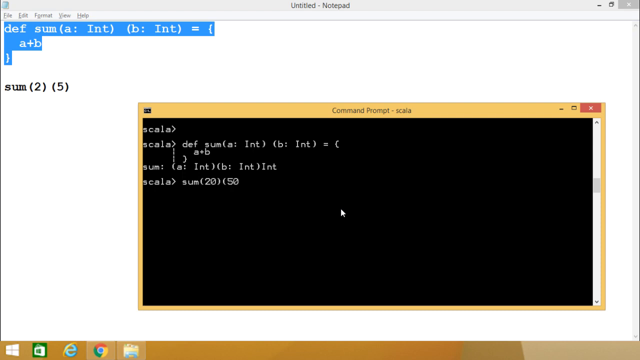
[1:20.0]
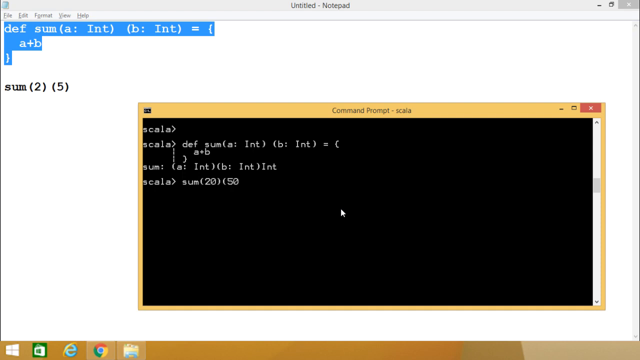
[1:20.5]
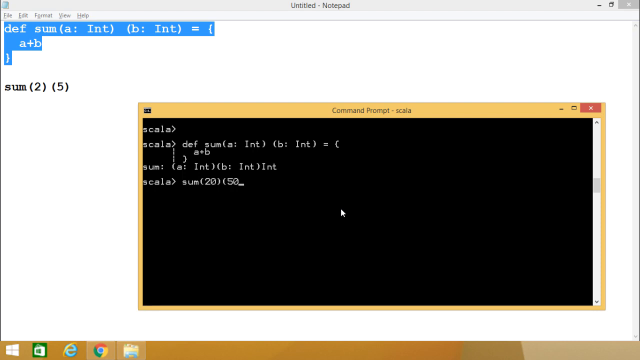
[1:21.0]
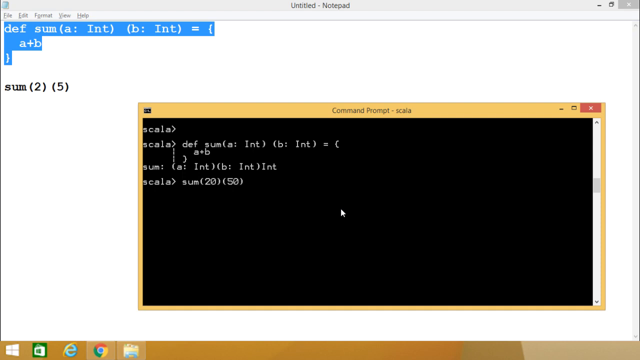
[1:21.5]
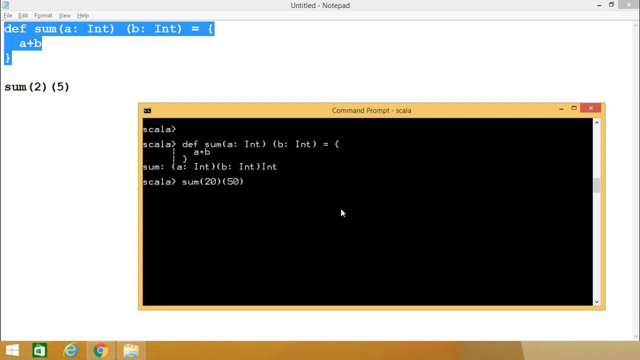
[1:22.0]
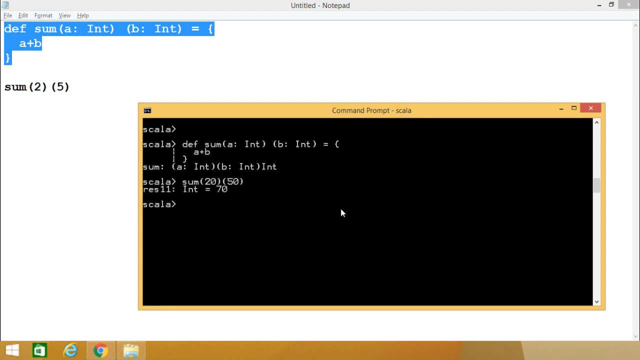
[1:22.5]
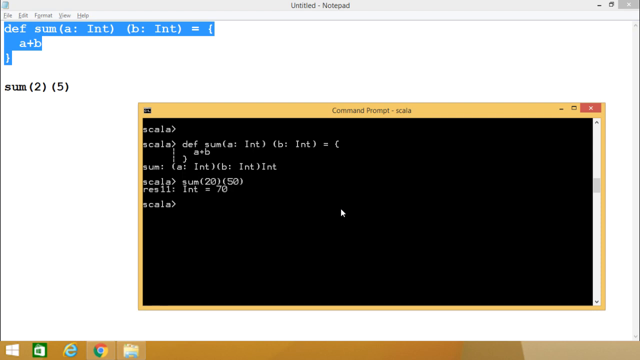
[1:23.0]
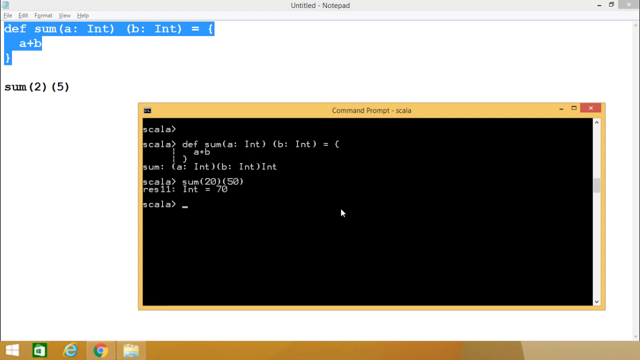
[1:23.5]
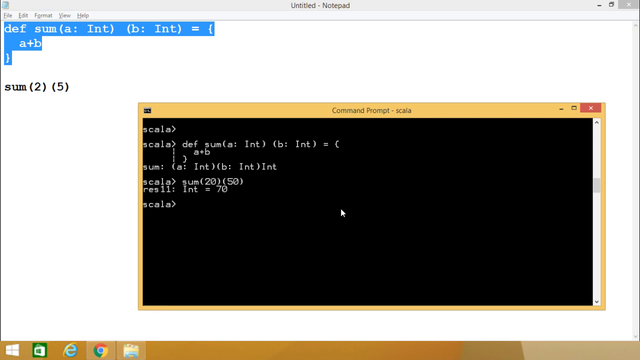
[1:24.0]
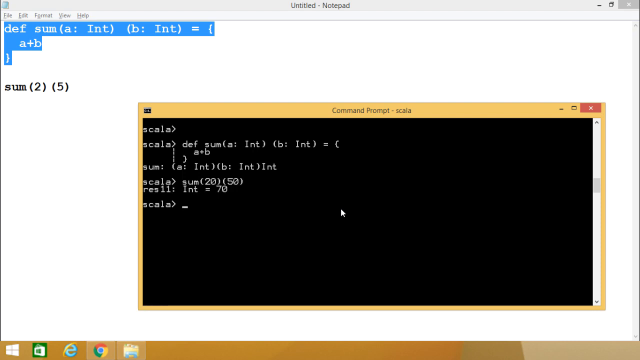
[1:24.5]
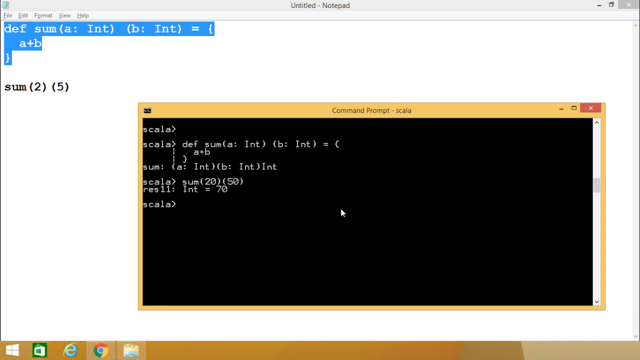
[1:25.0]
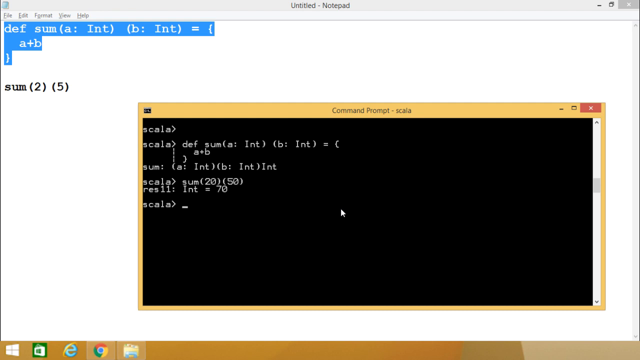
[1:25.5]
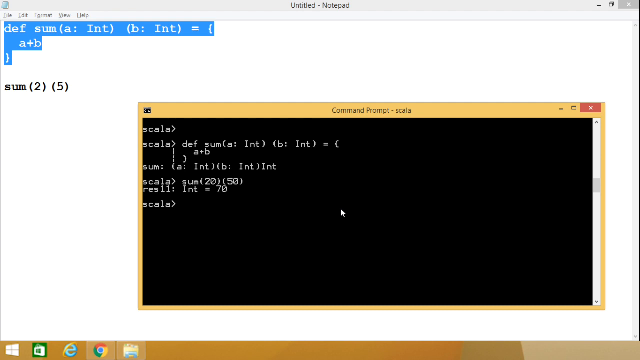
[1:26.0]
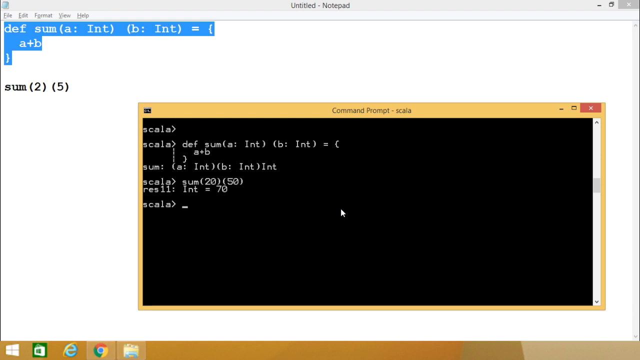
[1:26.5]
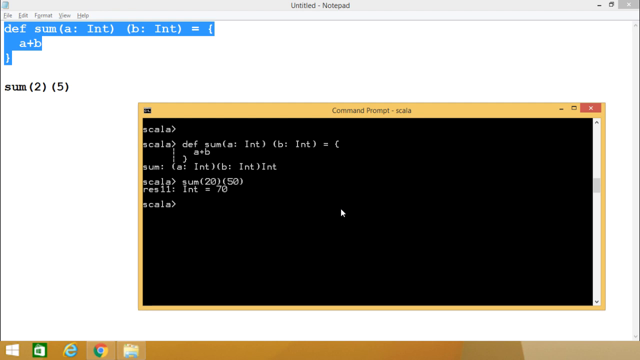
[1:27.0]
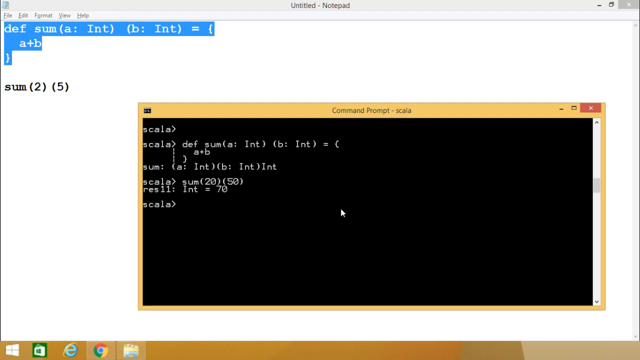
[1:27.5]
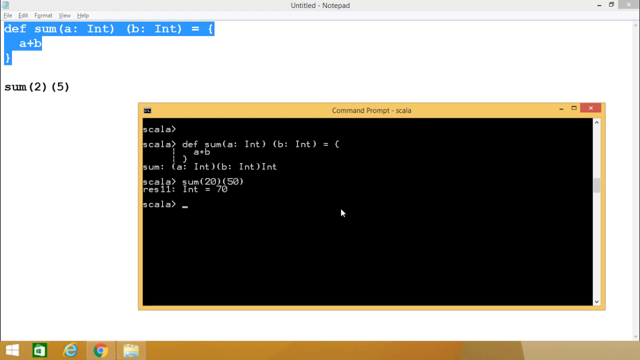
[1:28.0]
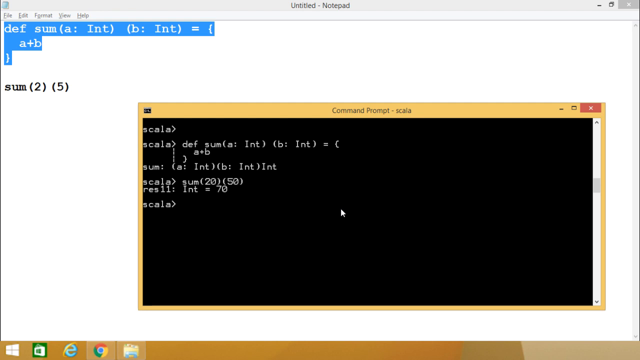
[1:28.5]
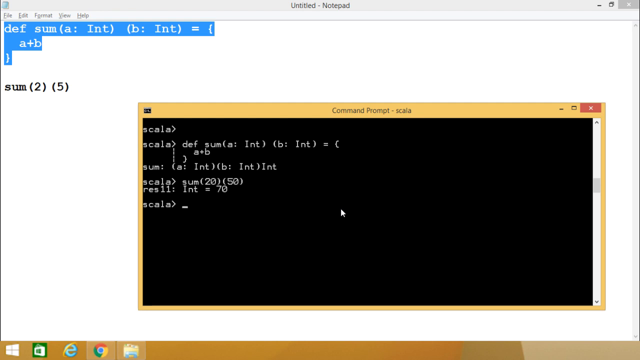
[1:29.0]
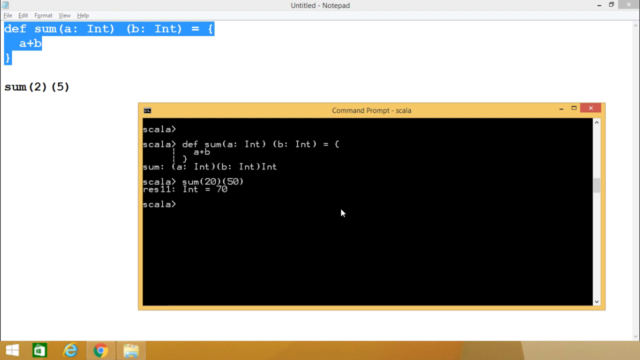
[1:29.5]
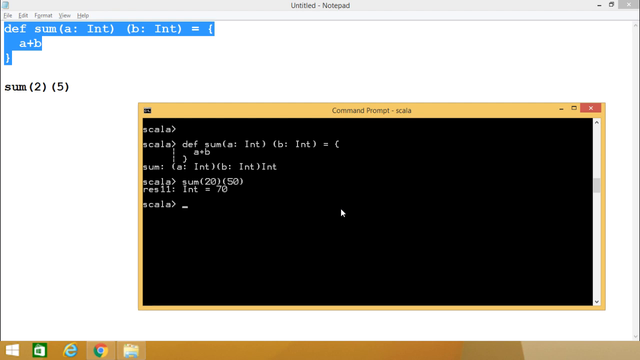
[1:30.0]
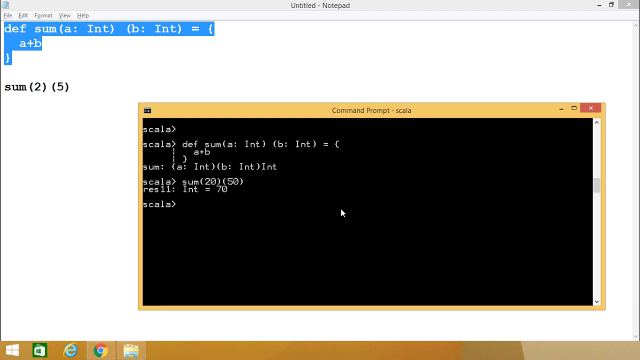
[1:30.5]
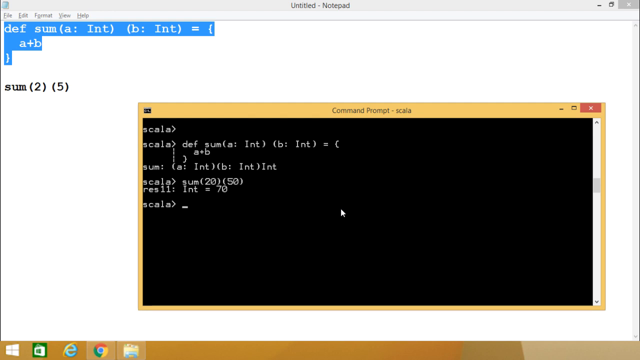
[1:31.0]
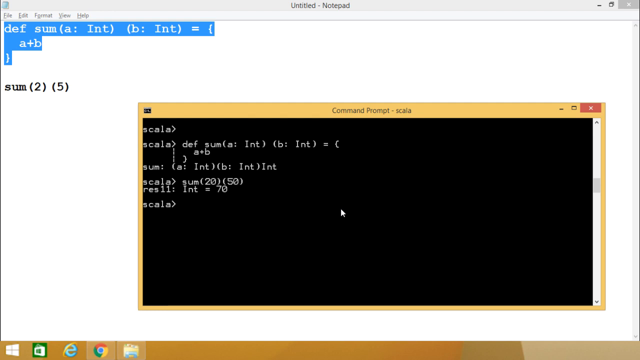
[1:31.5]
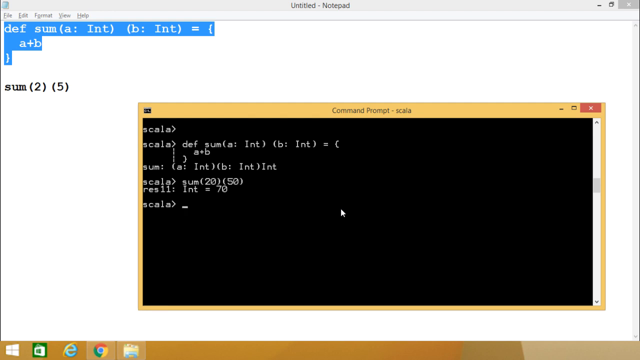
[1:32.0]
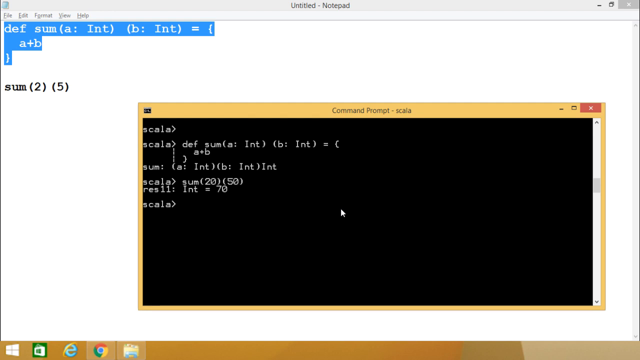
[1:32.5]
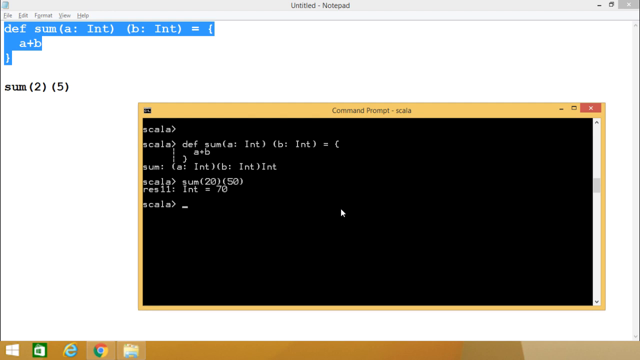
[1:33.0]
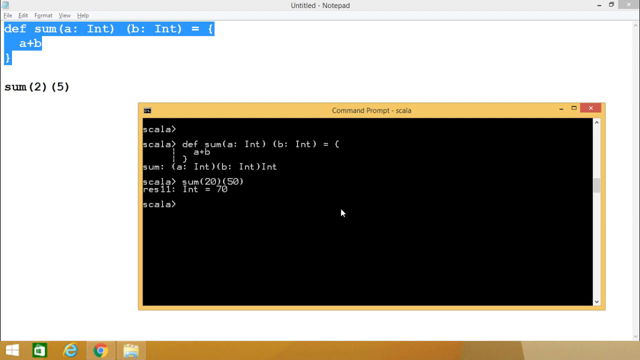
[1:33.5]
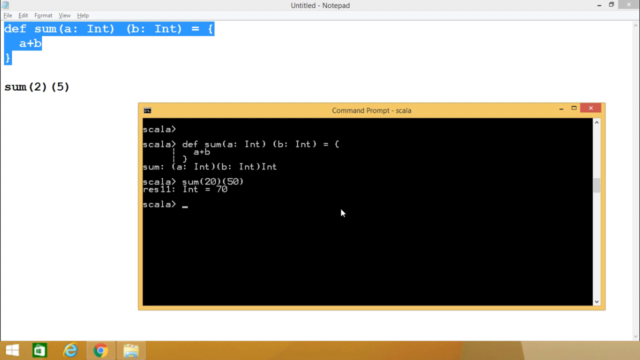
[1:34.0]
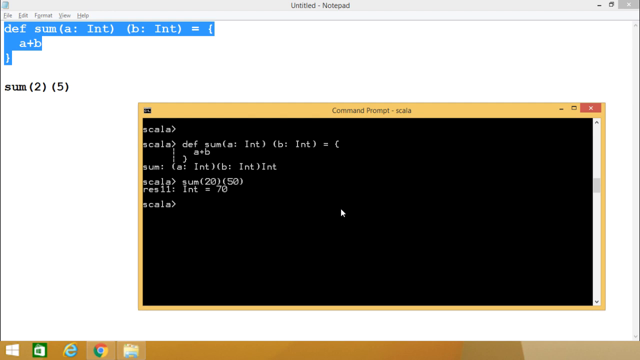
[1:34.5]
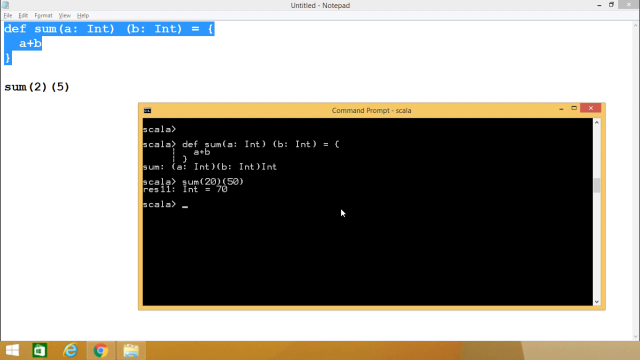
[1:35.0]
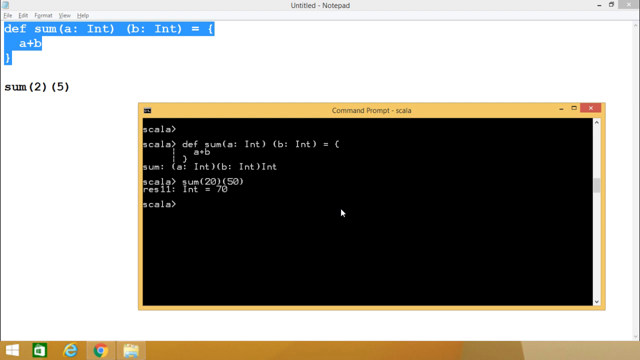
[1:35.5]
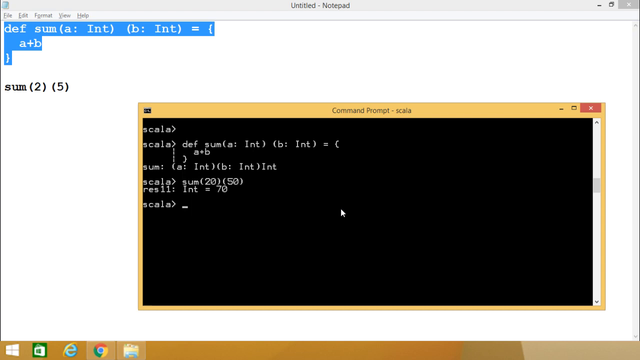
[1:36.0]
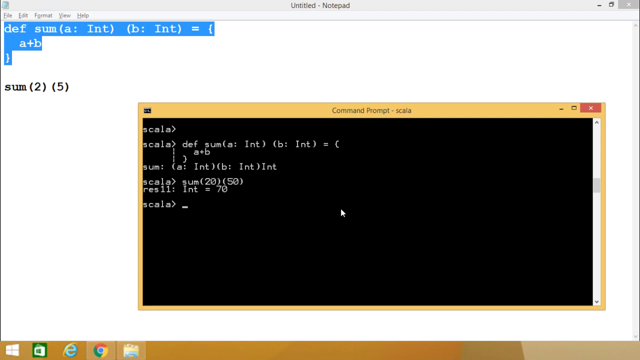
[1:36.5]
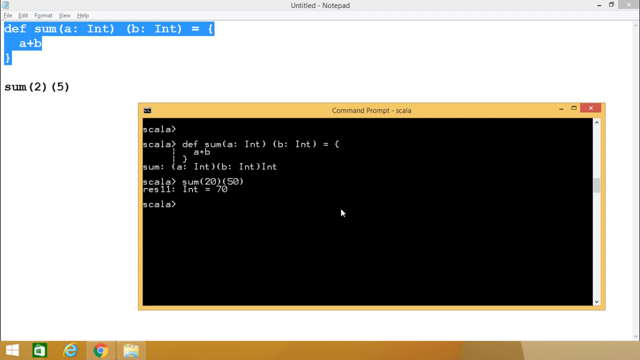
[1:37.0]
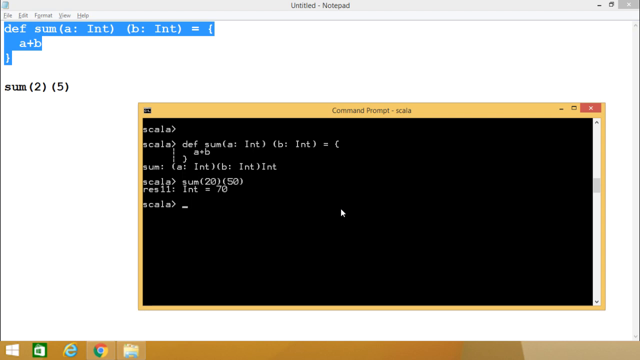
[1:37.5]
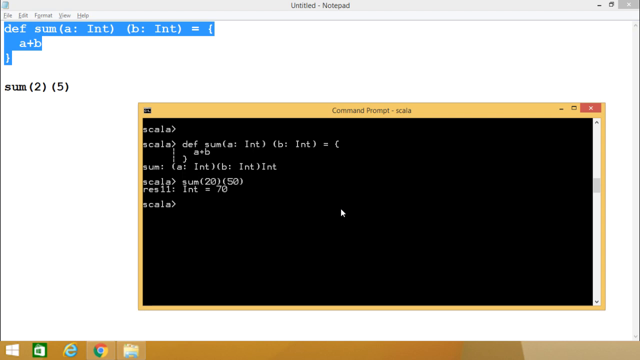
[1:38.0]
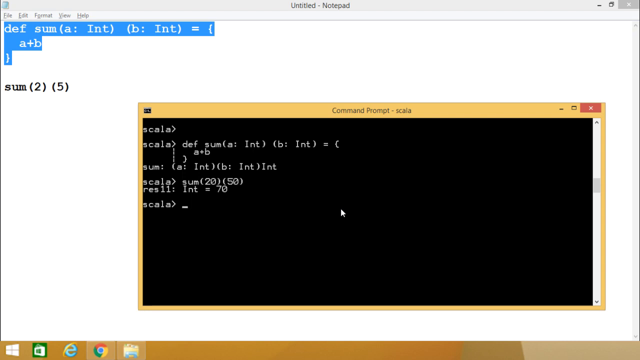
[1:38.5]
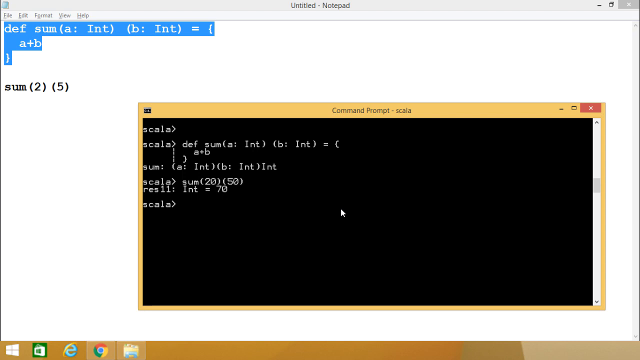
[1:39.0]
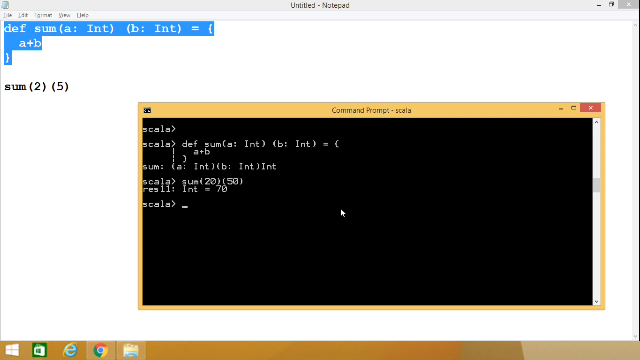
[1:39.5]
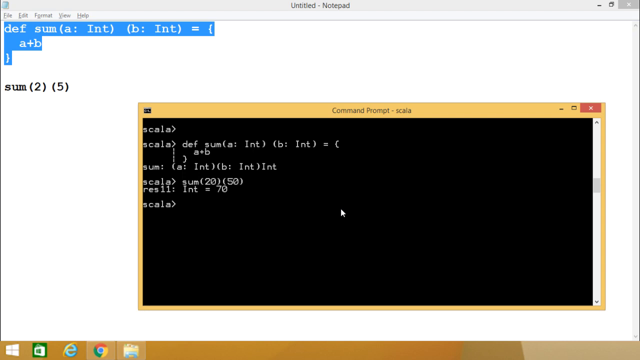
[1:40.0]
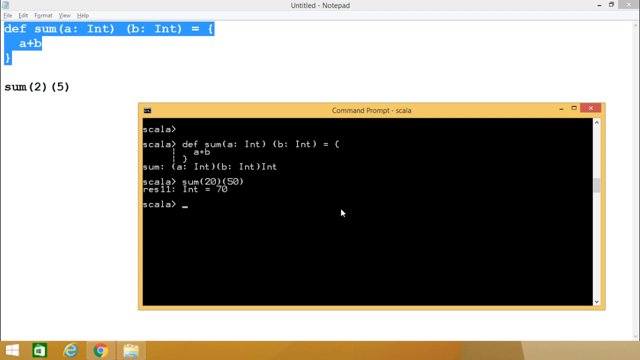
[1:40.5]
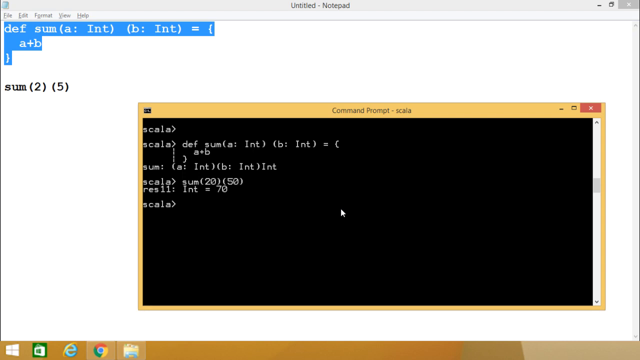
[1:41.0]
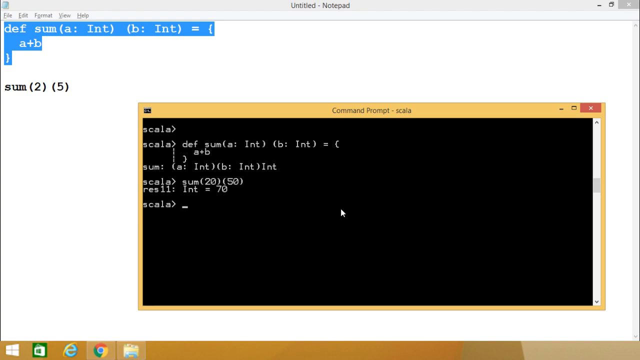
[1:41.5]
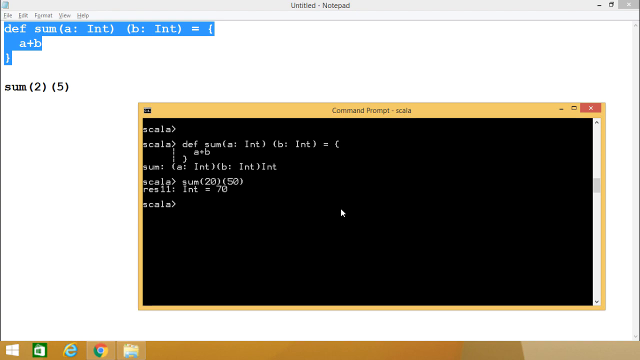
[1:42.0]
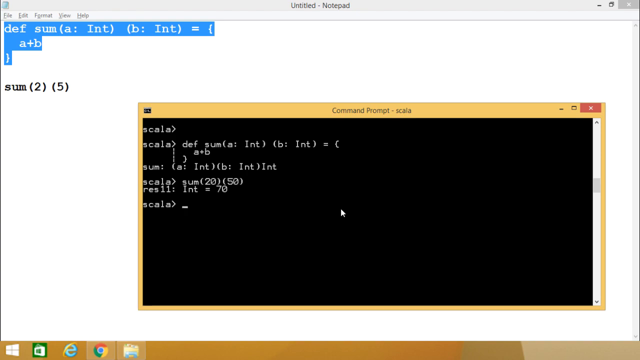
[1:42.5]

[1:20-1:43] More new content suddenly appears on the blackboard. The cursor after "Scala" continues to blink. The three lines in the upper left corner of the screen remain highlighted in blue. The mouse remains in the center of the blackboard in its arrow state, since it is not over the characters and not loading. On the white page, the first, second, and third rows are selected in blue, while the last row, "sum (2) (5)", is still in its original state of black text on a white background. The blackboard has many more words than at the beginning of the video, with three more lines of content, all white words on a black background.